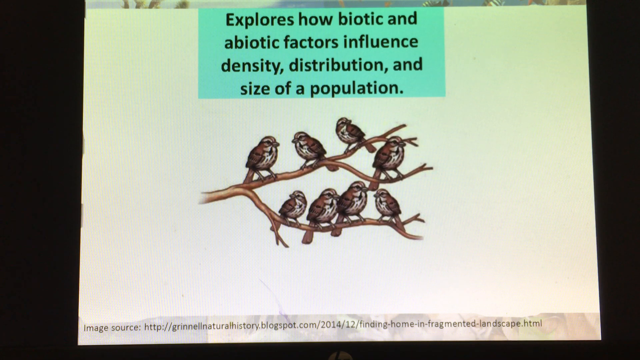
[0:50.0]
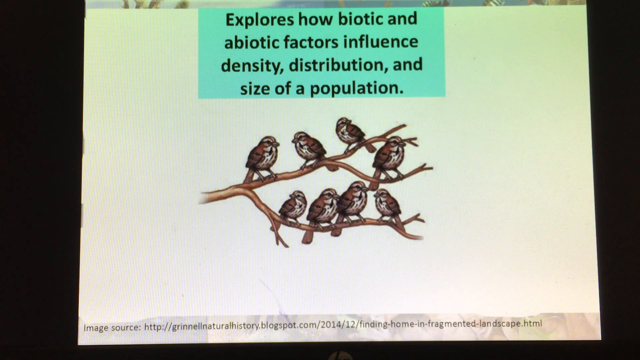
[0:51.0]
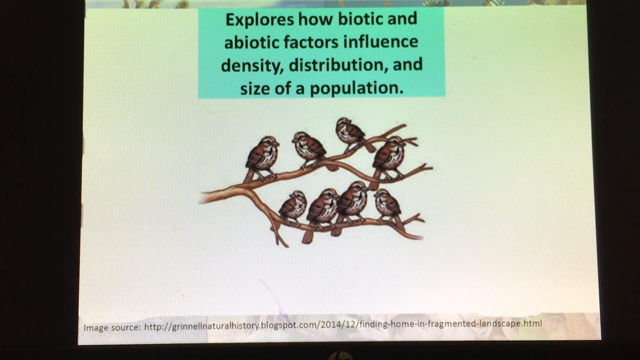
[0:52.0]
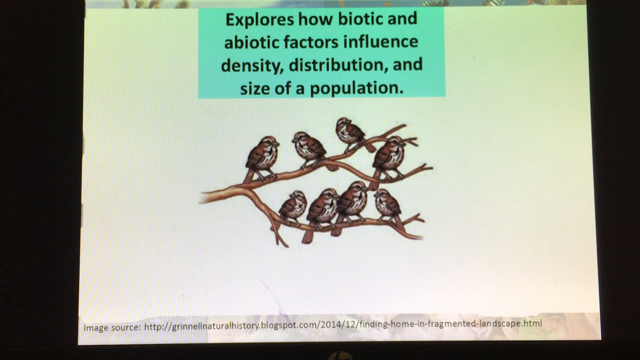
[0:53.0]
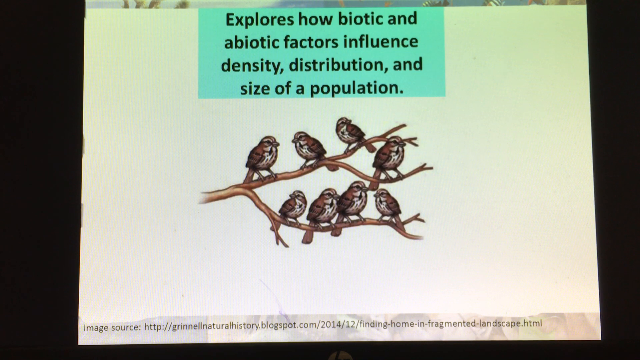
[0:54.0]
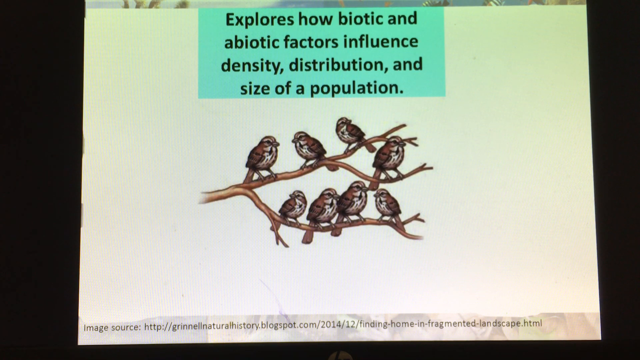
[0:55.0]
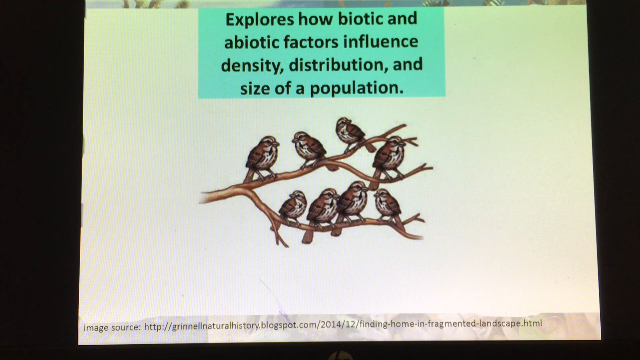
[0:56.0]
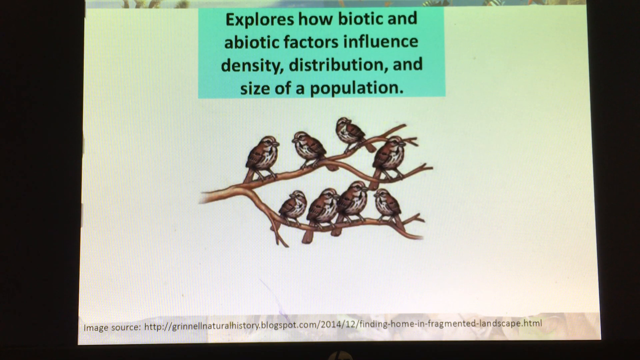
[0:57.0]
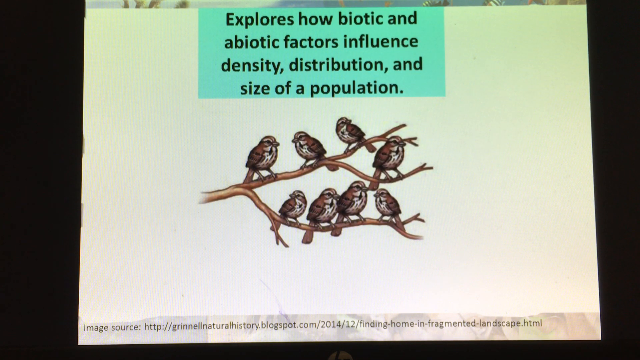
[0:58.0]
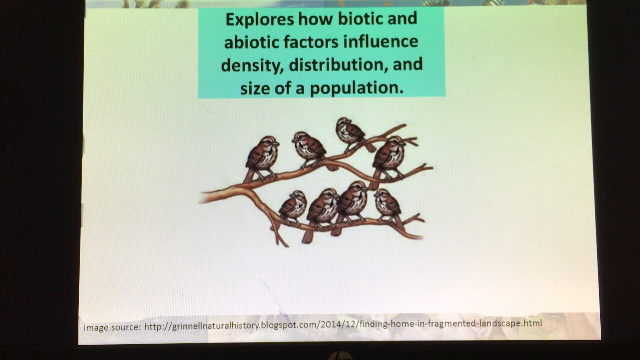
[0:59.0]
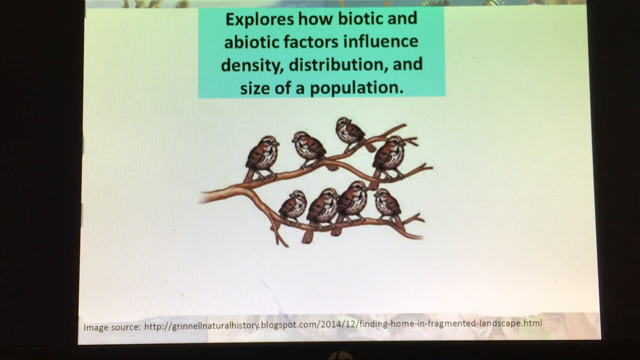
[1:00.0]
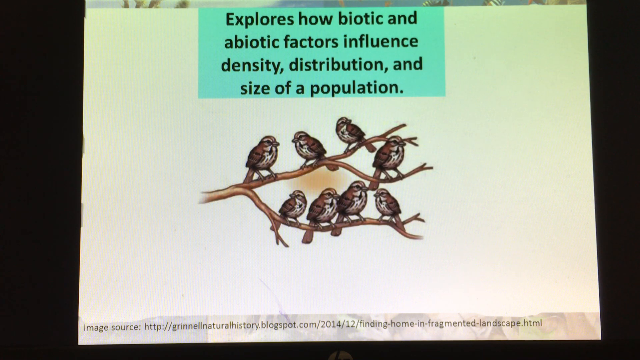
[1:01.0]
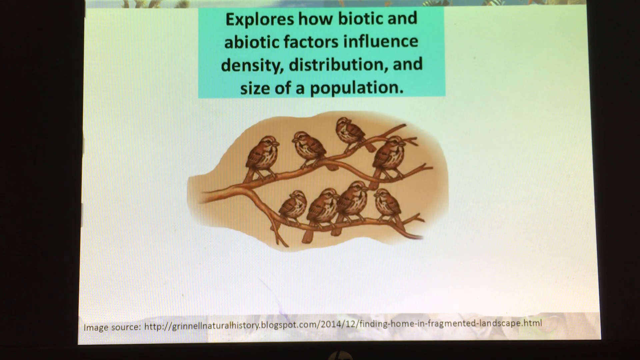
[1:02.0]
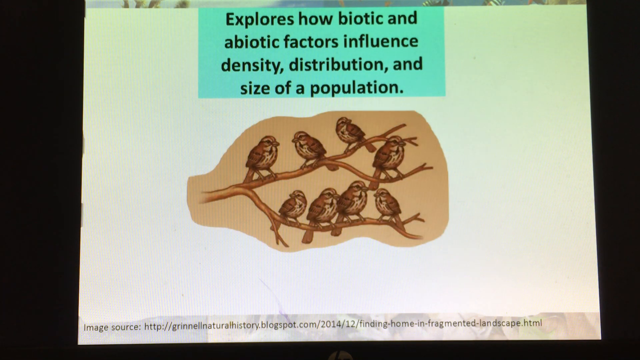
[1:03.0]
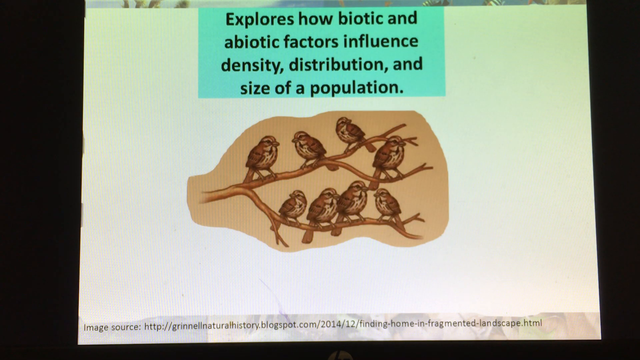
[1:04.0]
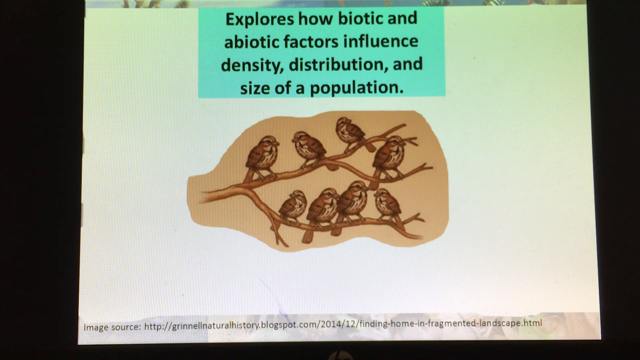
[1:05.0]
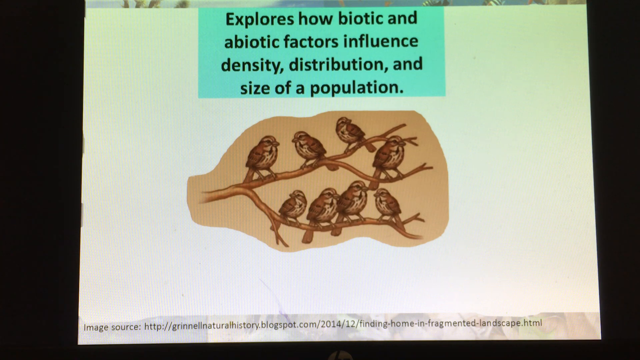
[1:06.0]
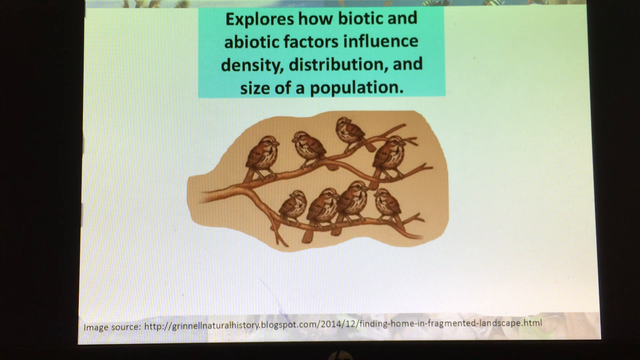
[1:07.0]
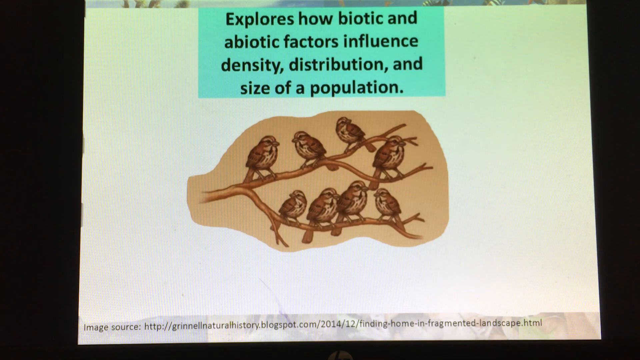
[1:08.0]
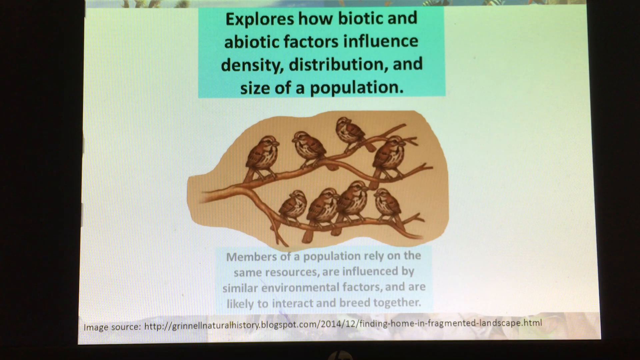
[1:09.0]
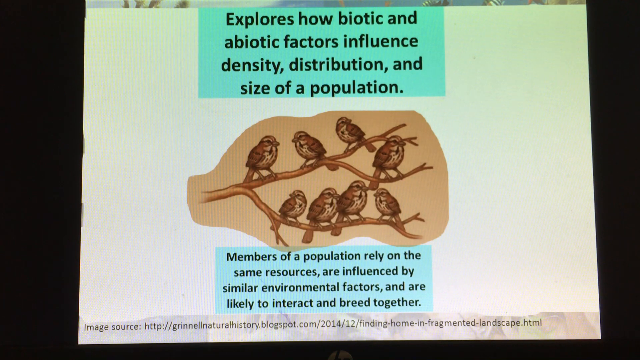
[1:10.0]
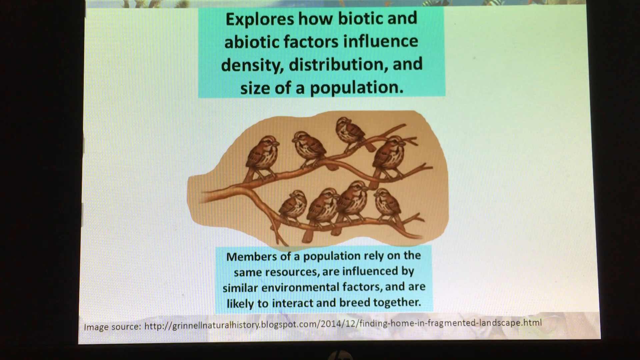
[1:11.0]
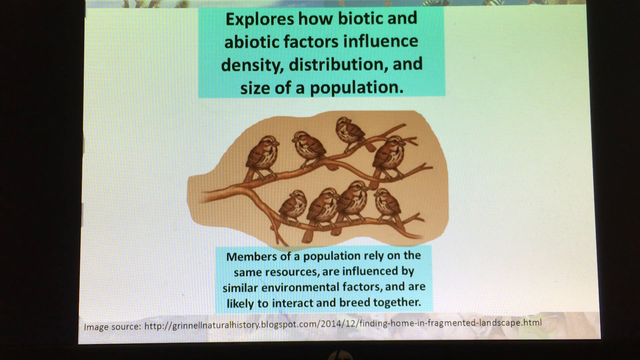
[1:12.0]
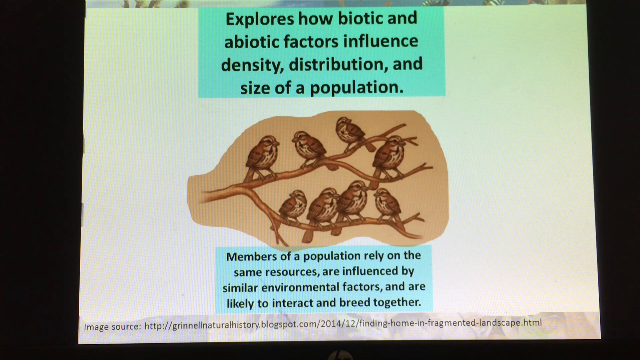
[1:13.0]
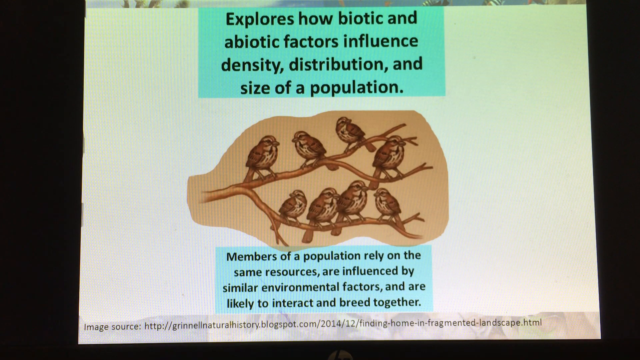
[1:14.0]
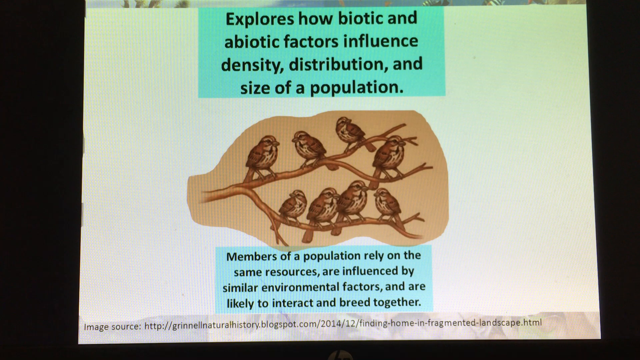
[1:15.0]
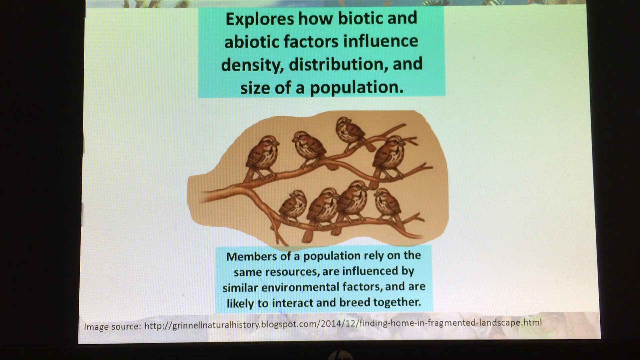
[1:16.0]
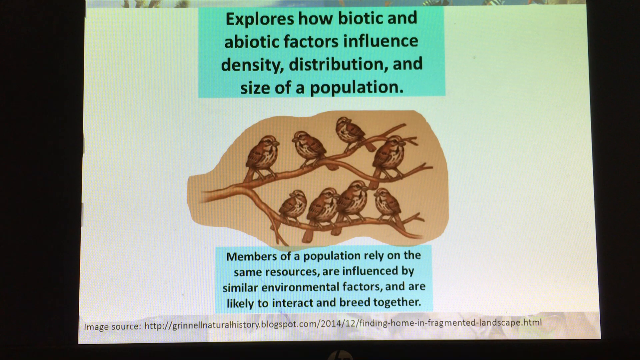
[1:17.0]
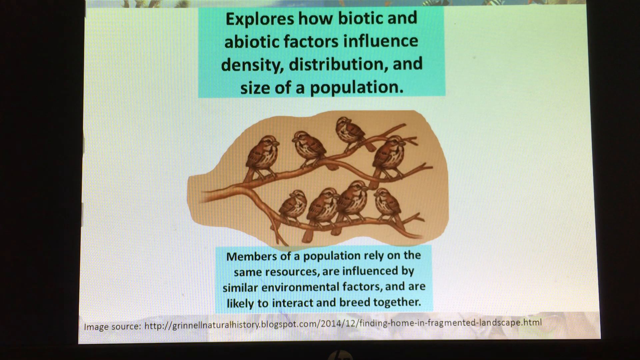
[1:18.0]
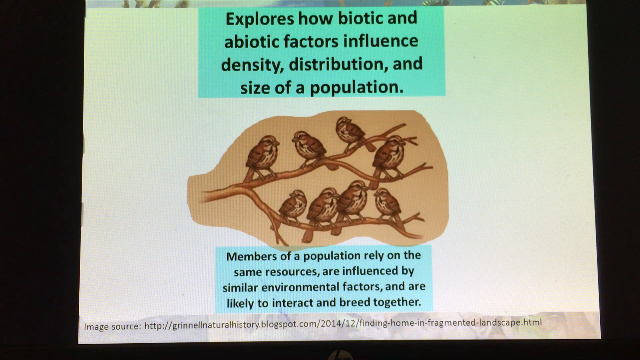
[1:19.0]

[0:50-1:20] The same slide is shown, with the text "explore how biotic and abiotic factors influence density distribution and size of a population" in a box at the very top. Below it is the picture of eight birds across three branches: three birds on one branch, one bird on the small branch, and four on a larger branch underneath. The birds are all brown and white tufted. The screen stays unchanged for a while, then changes: a brown outline fills in around the birds and the branches, surrounding the outline of the picture. Below that, a statement appears: "members of a population rely on the same resources, are influenced by similar environmental factors, and are likely to interact and breed together." The background of this statement is the same blue highlight as the box above.